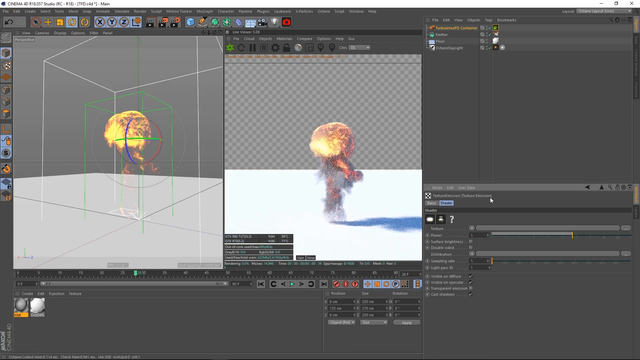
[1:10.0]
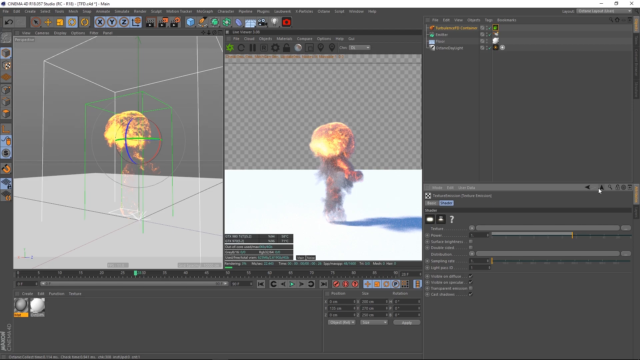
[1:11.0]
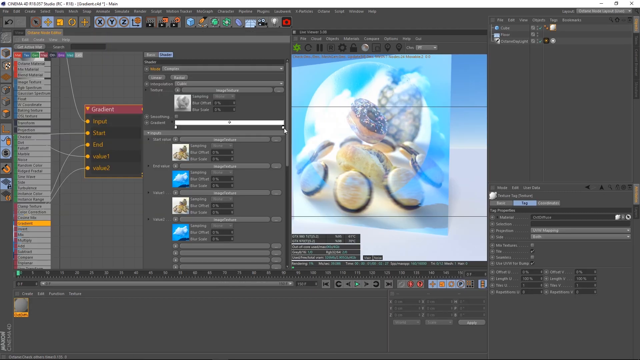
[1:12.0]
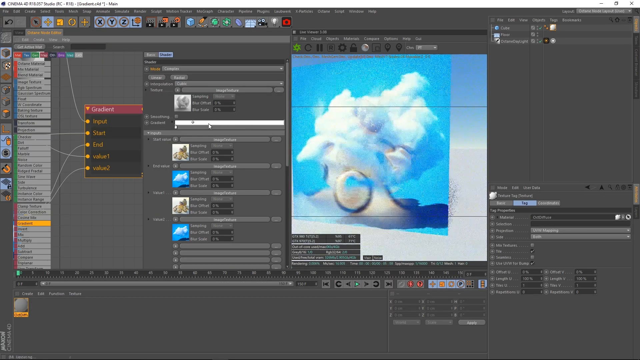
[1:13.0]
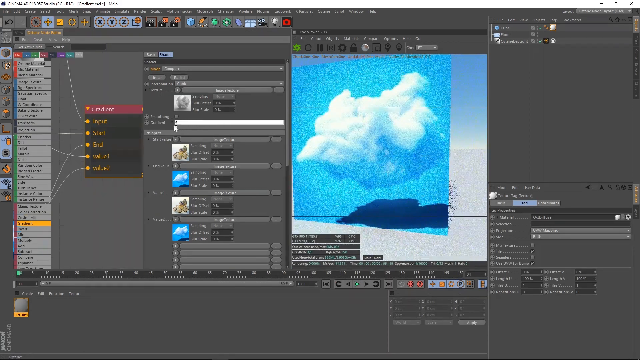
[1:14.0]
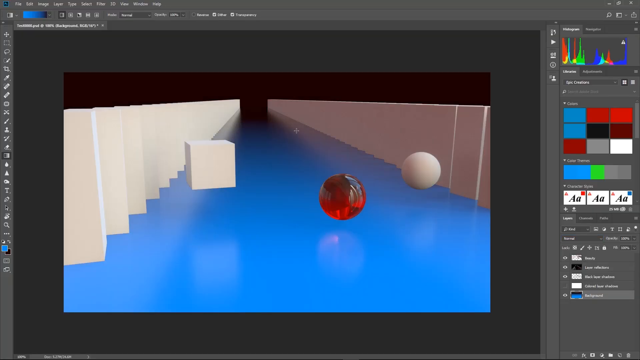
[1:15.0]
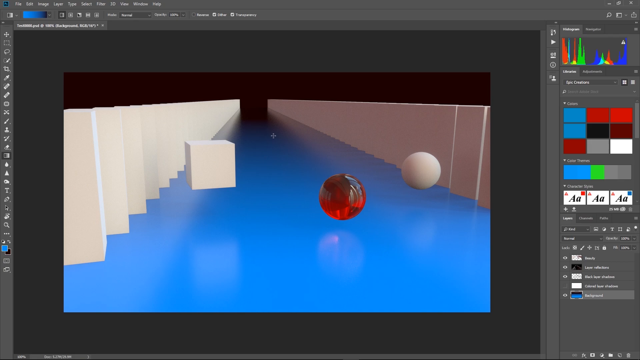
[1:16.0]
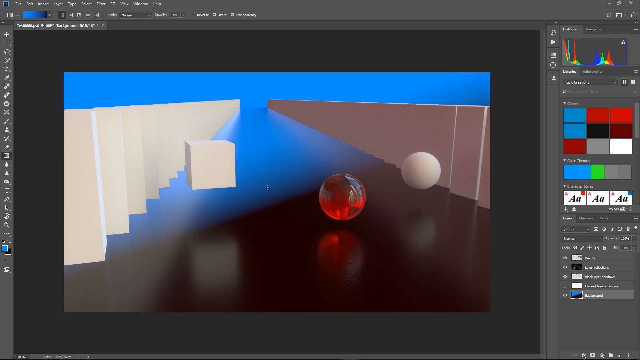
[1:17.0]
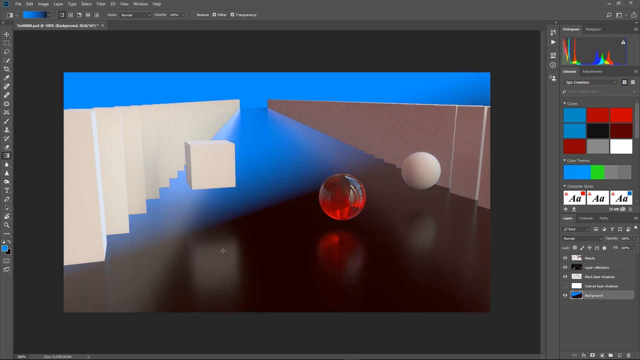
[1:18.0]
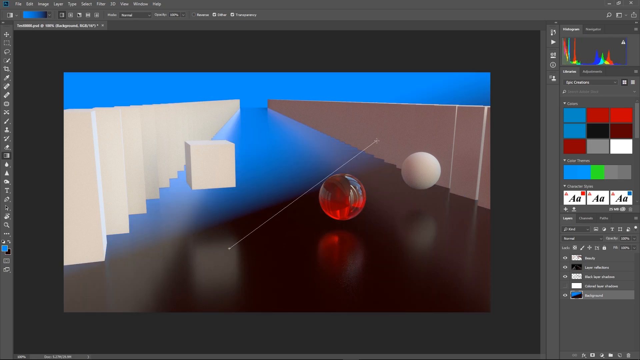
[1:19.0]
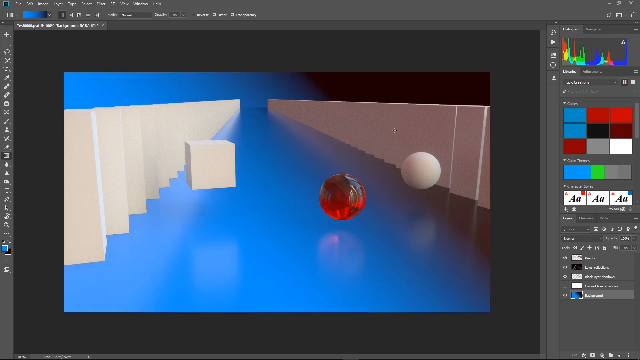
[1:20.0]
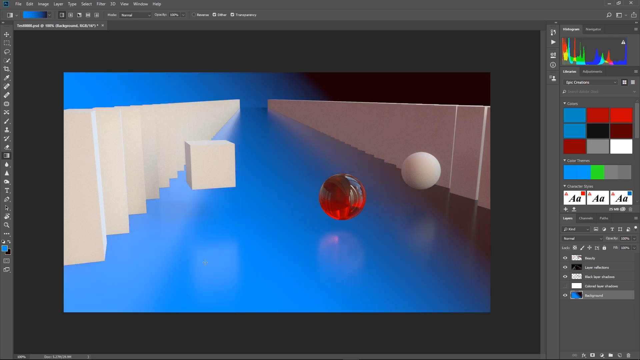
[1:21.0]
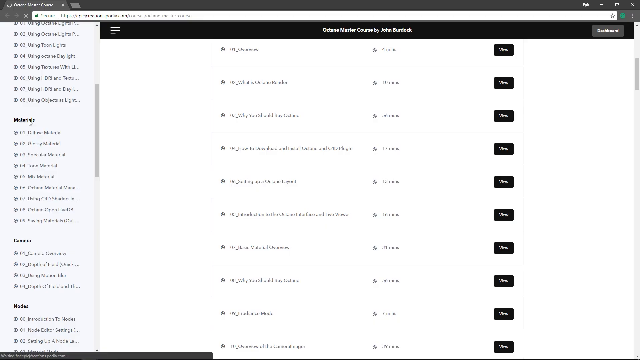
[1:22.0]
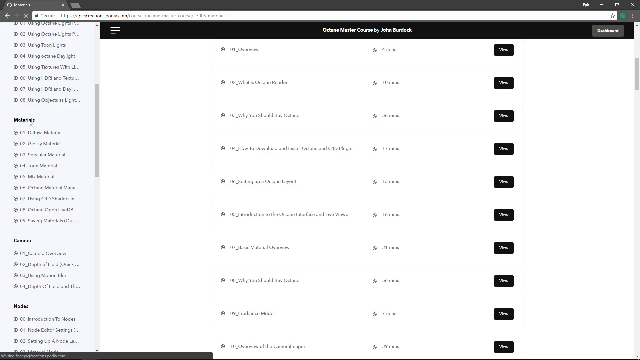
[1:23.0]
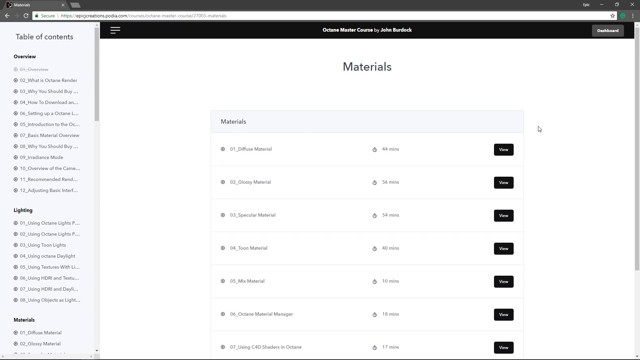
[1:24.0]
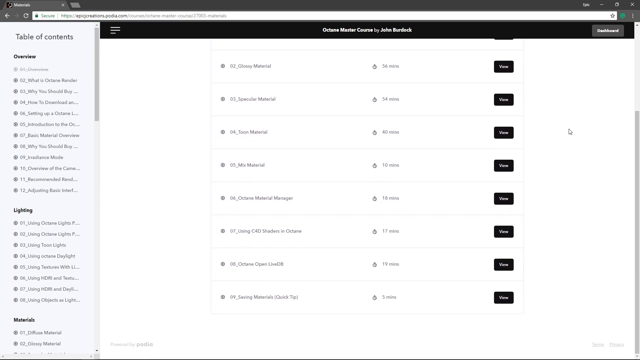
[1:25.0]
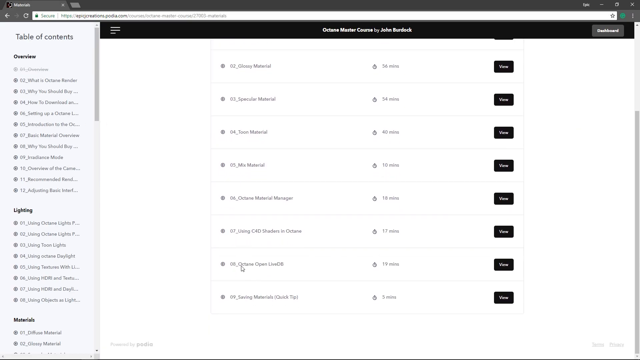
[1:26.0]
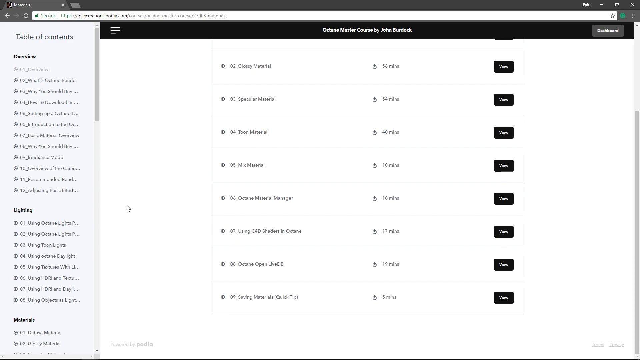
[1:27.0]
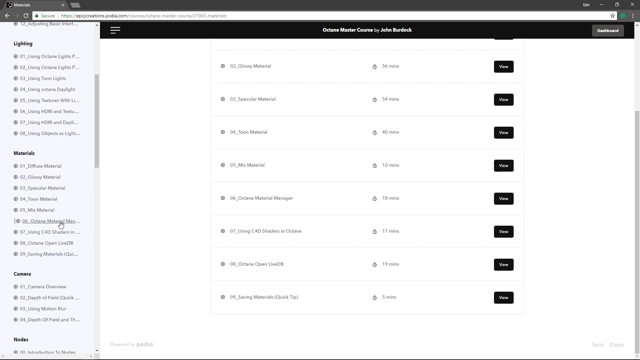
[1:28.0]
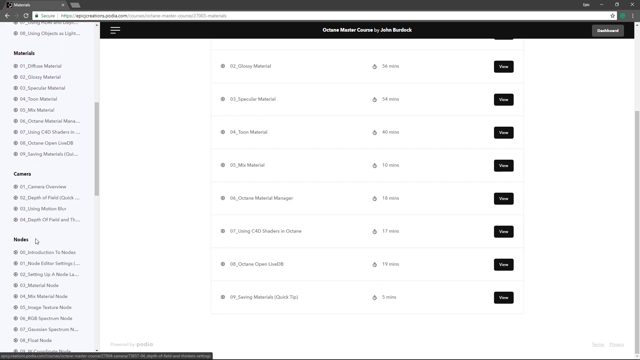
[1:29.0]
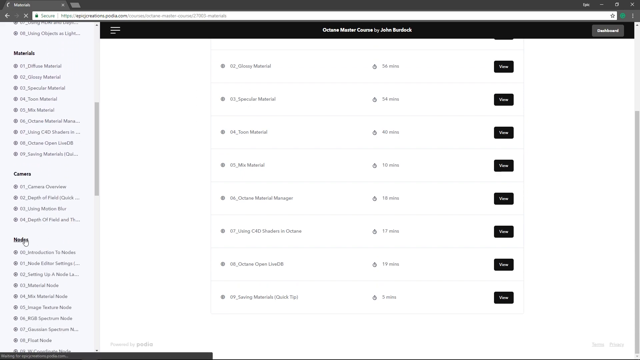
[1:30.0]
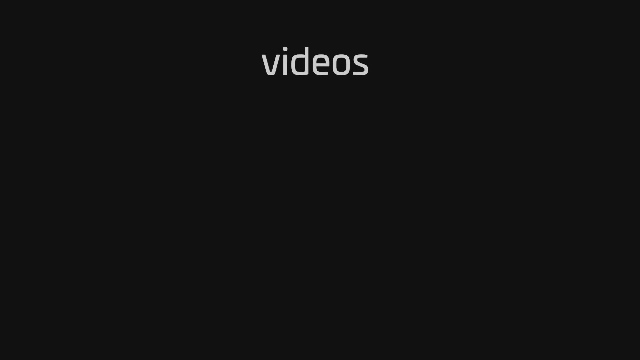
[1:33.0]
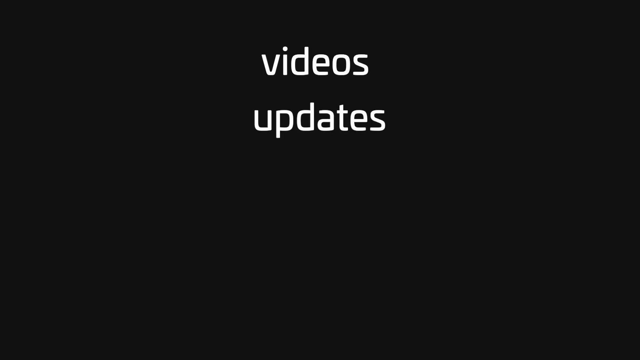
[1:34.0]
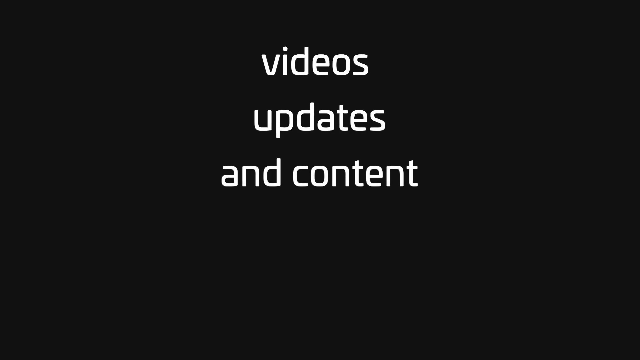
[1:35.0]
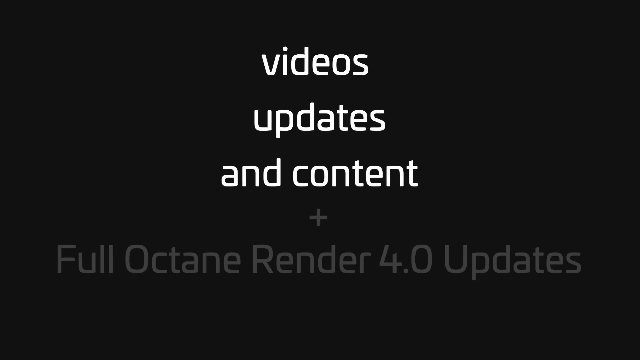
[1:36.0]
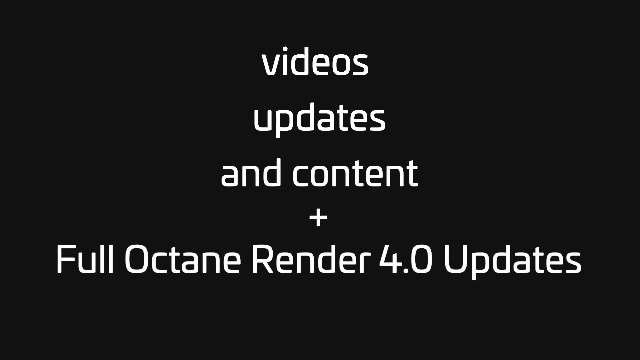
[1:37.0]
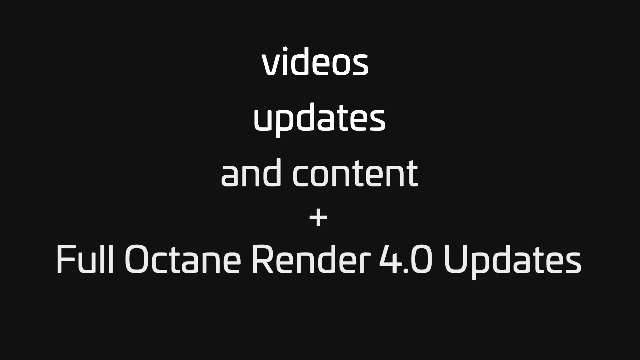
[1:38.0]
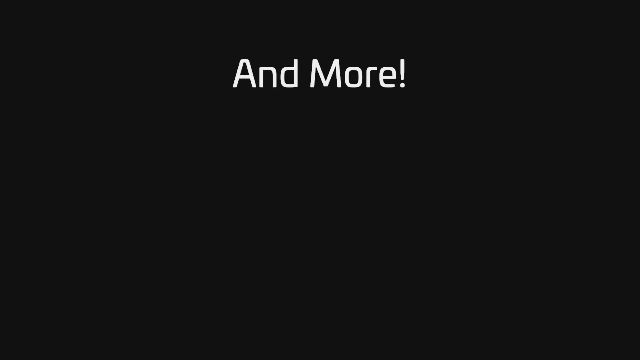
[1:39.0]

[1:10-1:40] The explosion-looking object is back, and its rendered version now has the same orange color scheme, looking like an explosion rendered in the center. The video cuts to another object, with a rendered version in the center showing a cloud above a blue flooring, and a tab is open within the software showing a bunch of settings. The screen then switches to Photoshop. An image shows a black flooring with what look like all-white domino blocks on the left side running to the end of the screen, creating depth; on the right are the same, but pinkish red, also leading to the end. In the center, a white cube floats on the left, a red sphere in the middle looks shiny and in glass, and a white sphere is on the right. The flooring underneath the dominoes and shapes is changed to a blue to dark red gradient. The colors are switched so the blue is on top and the red on the bottom, and then switched again so the blue is on the left and the red on the top right. The video then switches to the sections of the Octane Master course. The mouse is on the left side at the materials; the page scrolls up to the top of the materials section, then the mouse moves over and scrolls back down to the materials section, moves down to a certain lesson, moves back to the left, and goes to the nodes section in the table of contents. The screen fades to dark gray, and words appear in order: "Videos", "Updates", and "Content plus Full Octane Render 4.0 Updates". The screen goes dark gray again, and the text "and more" appears.